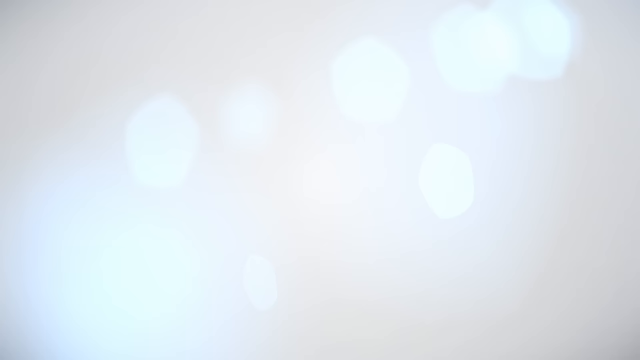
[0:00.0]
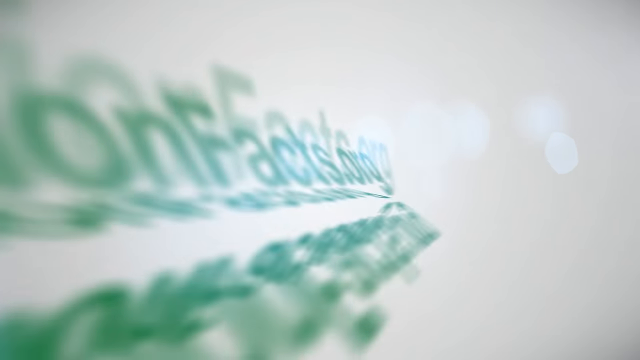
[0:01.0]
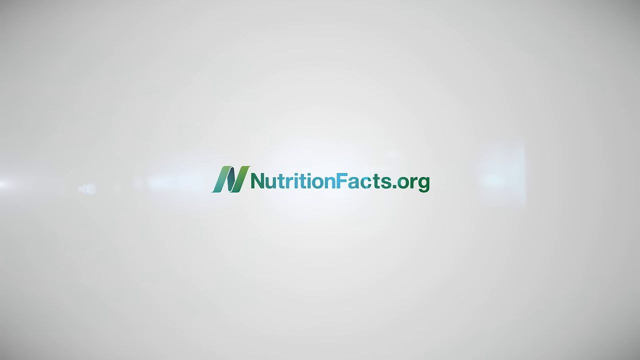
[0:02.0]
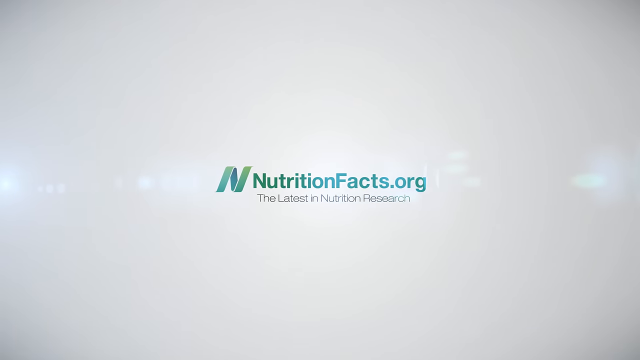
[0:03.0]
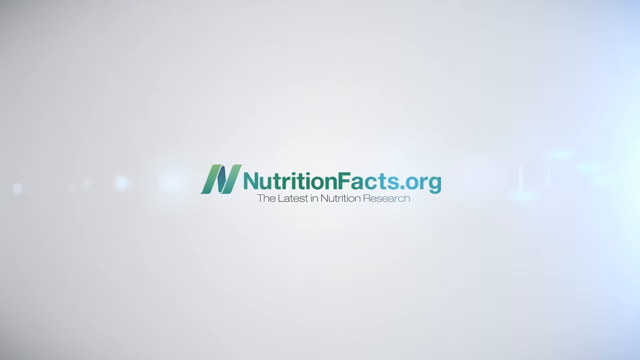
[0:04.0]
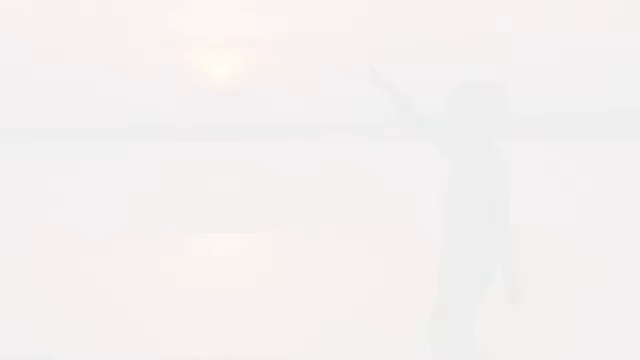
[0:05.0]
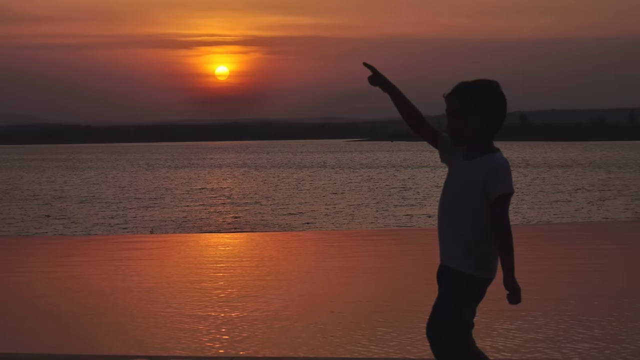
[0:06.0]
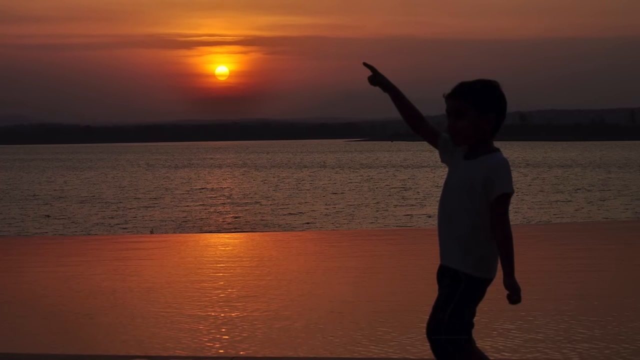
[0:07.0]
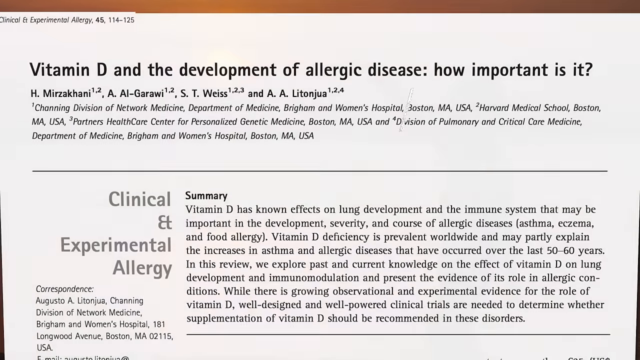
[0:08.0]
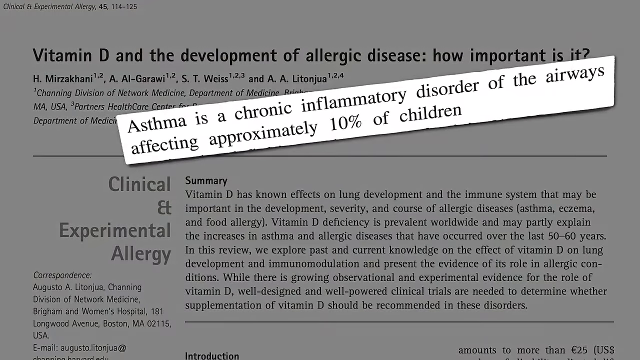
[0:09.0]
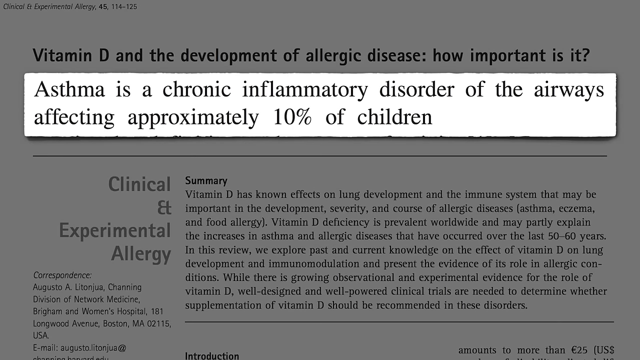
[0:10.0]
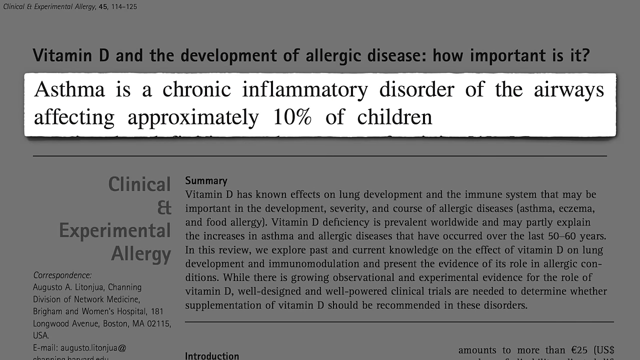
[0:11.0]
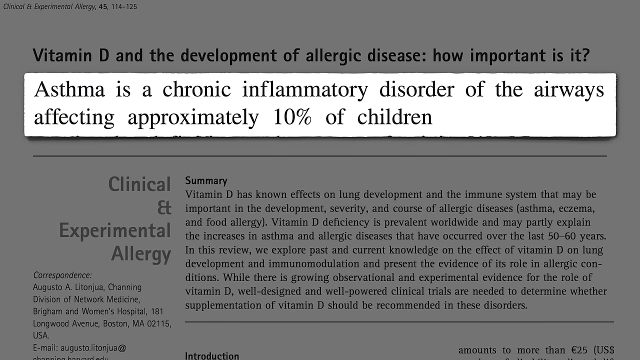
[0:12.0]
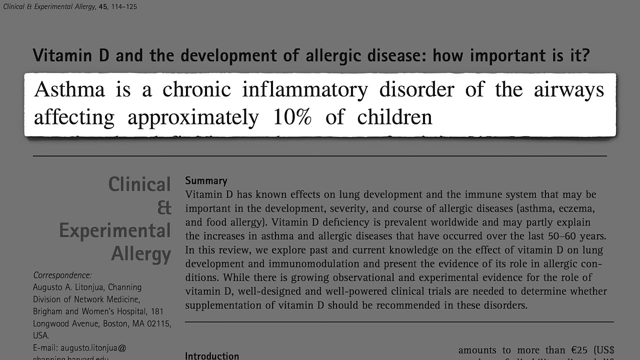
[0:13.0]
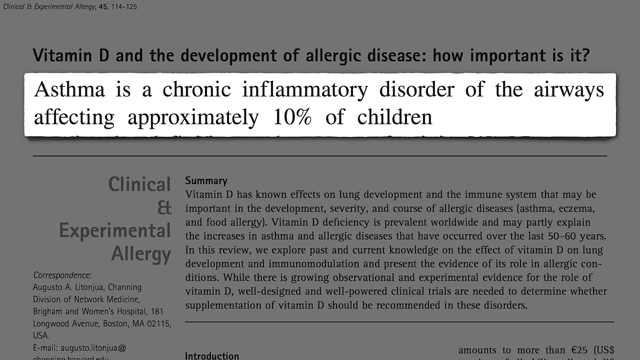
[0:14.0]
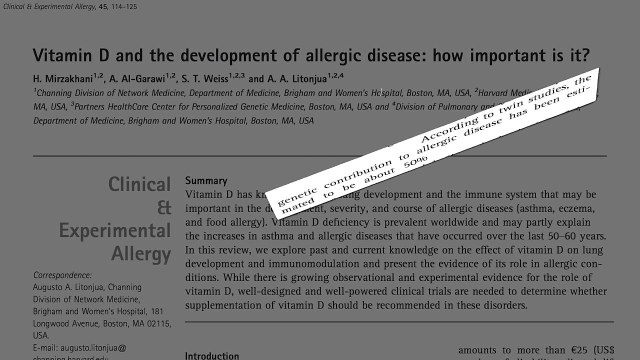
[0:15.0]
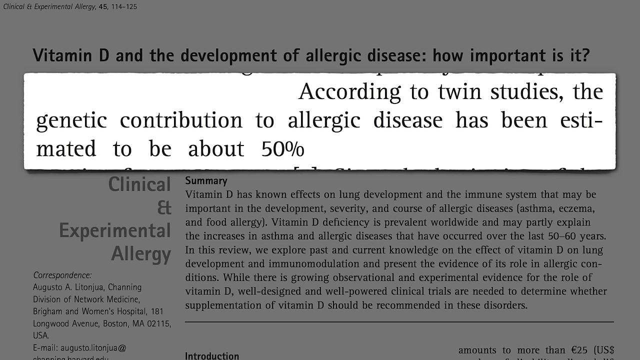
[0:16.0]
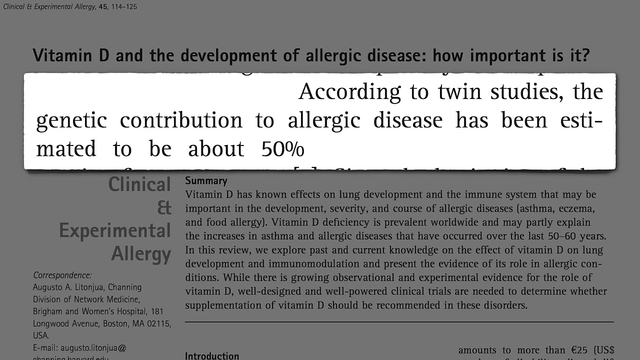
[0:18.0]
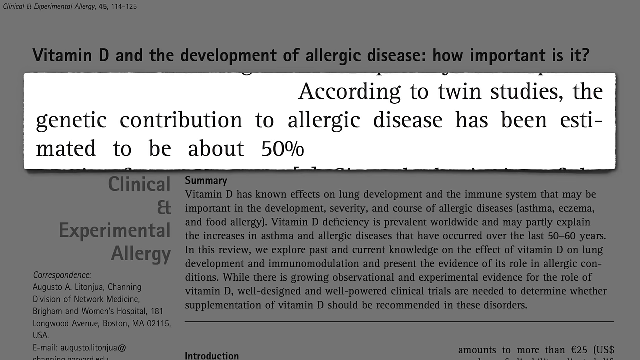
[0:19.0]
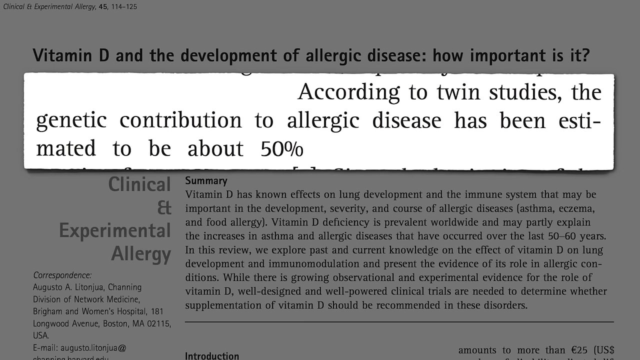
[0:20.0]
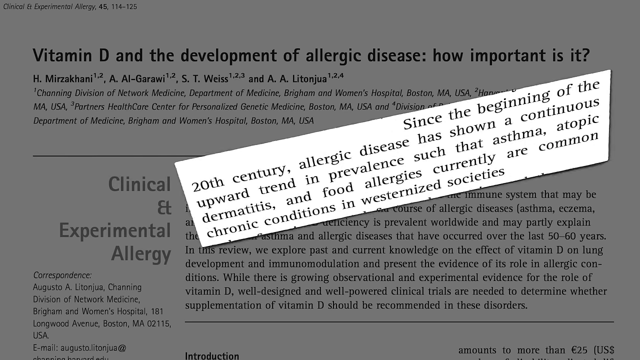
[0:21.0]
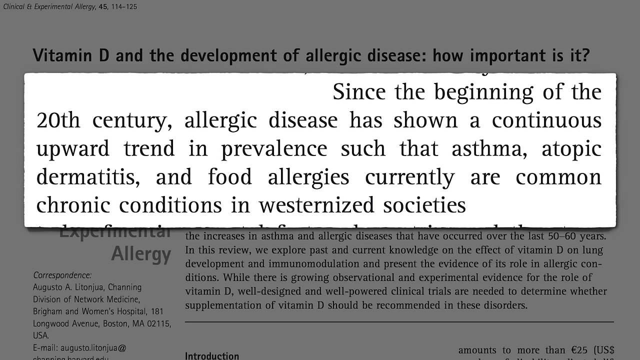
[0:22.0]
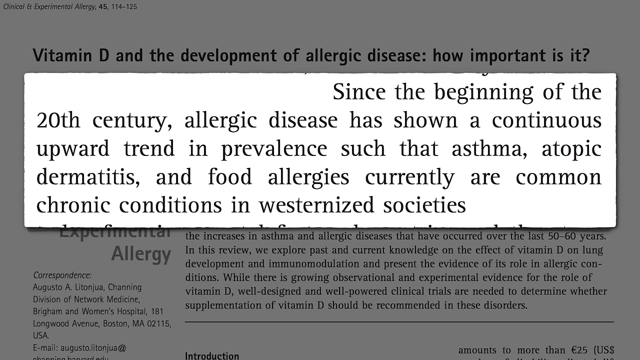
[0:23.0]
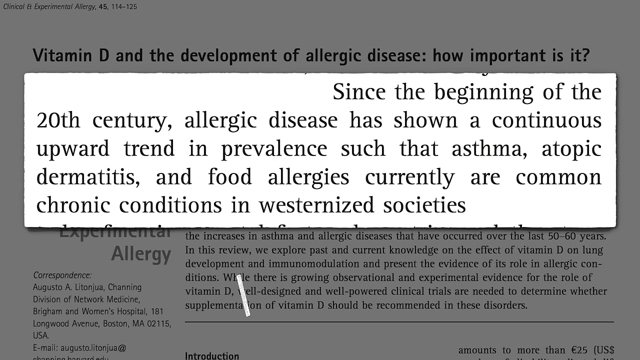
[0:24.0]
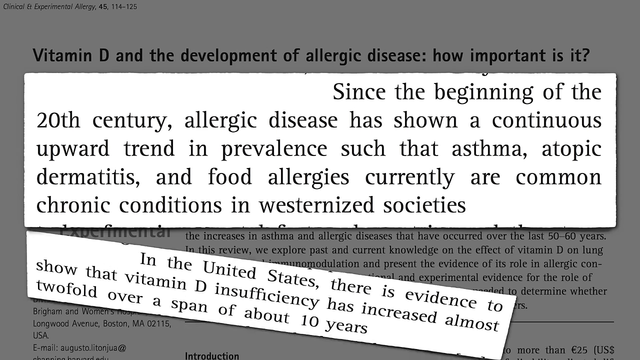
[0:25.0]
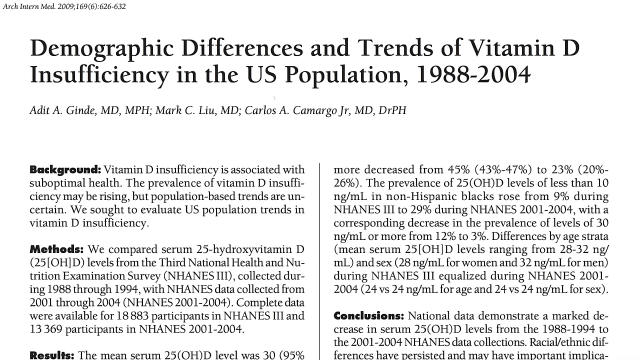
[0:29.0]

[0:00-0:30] A plain white screen is shown. A couple of seconds in, green words flash into the middle of the screen reading "nutritionfacts.org". Below them, in light gray, it says "the latest in nutrition research", and a logo, a large italic N, is next to the name. The screen goes completely white and then cuts to a still image of a boy standing on a beach at sunset with his right hand extended toward the sky, the sunset visible on the horizon. A paper then appears on the screen; at the top in bold font it reads "Vitamin D and the development of allergic disease. How important is it?" Below that is a summary, with a heading next to it saying "clinical experimental allergy". Several seconds later, an excerpt is displayed in a long rectangular white box: "asthma is a chronic inflammatory disorder of the airways affecting approximately 10% of children." This cuts away, and a new excerpt flashes on the screen: "According to twin studies, the genetic contribution to allergic disease has been estimated to be about 50%." Two more excerpts are then displayed. The top one reads "since the beginning of the 20th century, allergic disease has shown a continuous upward trend in prevalence such that asthma, atopic dermatitis, and food allergies currently are common chronic conditions in Westernized society." The bottom one reads "in the United States, there is evidence to show that vitamin D insufficiency has increased almost twofold over a span of about 10 years." The video then cuts to another page.